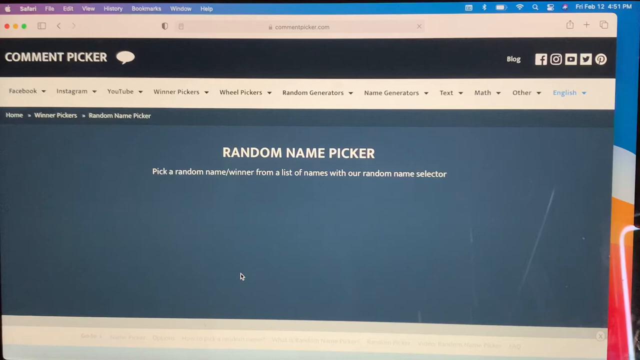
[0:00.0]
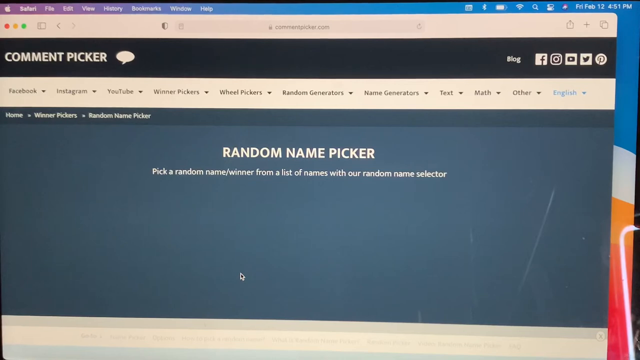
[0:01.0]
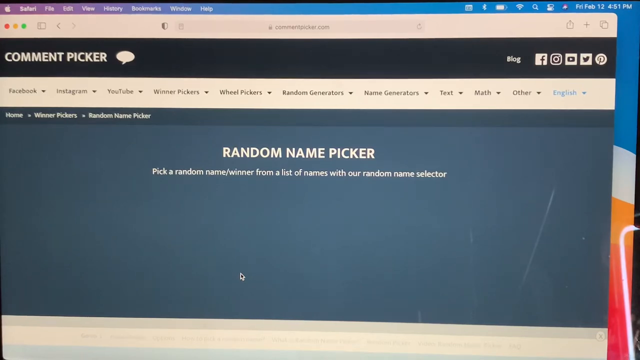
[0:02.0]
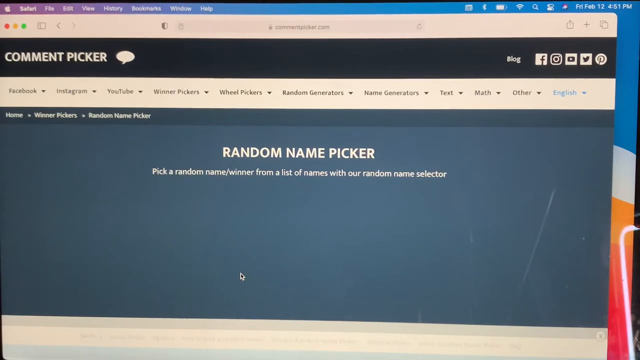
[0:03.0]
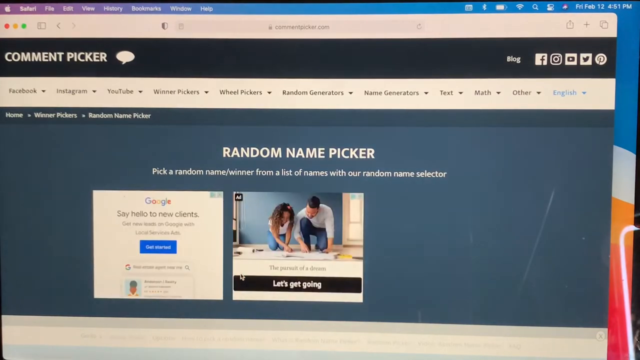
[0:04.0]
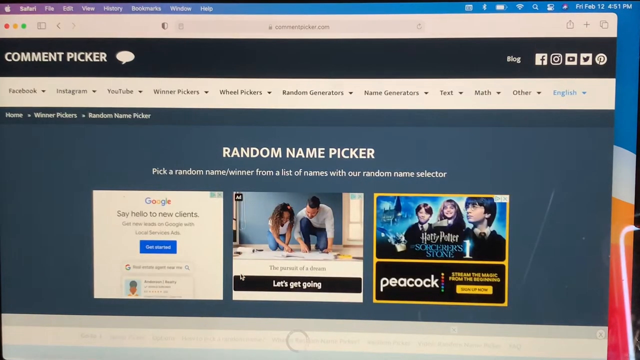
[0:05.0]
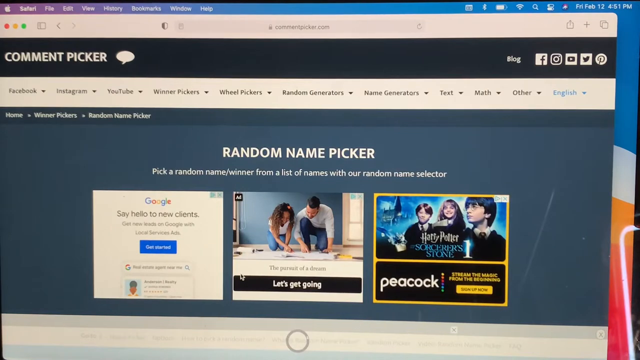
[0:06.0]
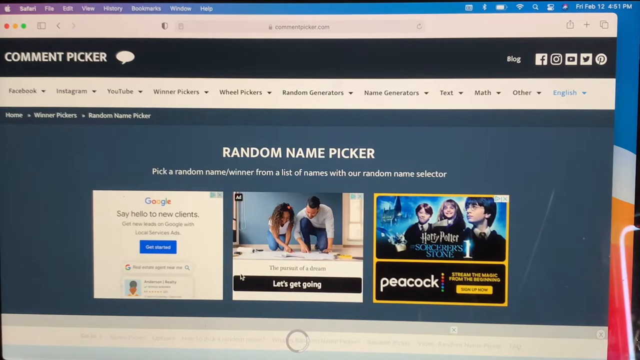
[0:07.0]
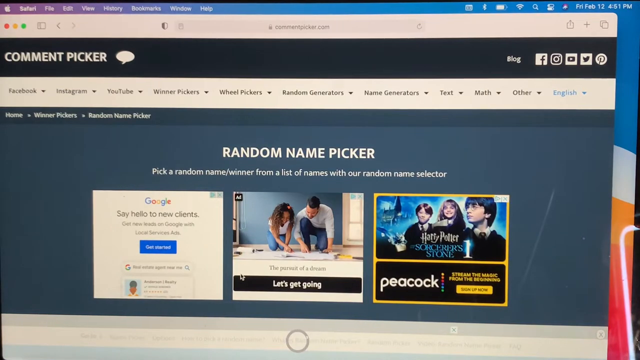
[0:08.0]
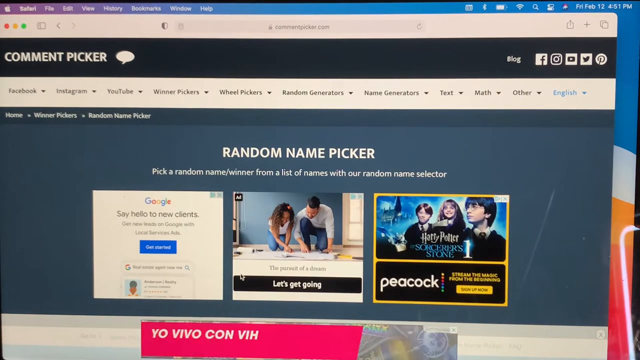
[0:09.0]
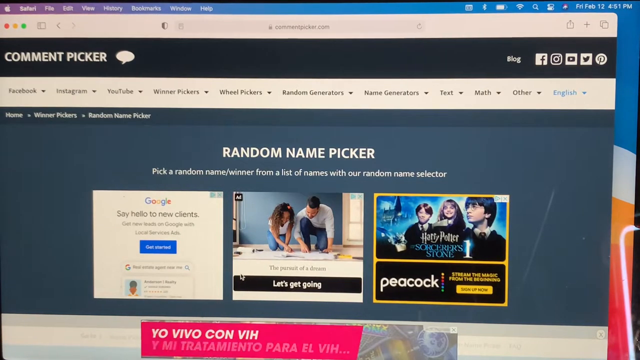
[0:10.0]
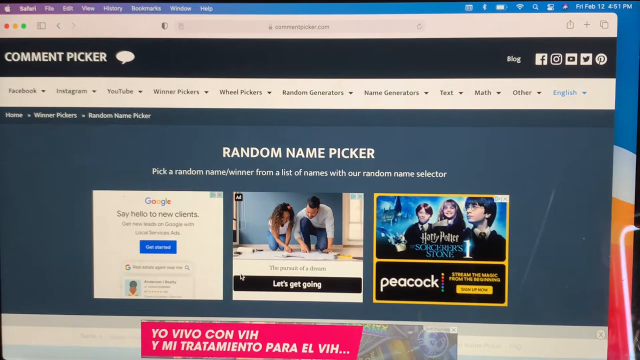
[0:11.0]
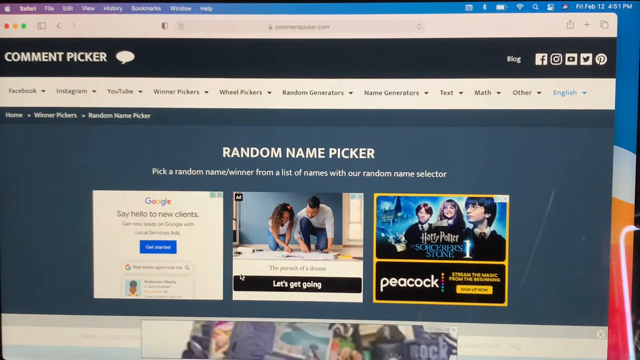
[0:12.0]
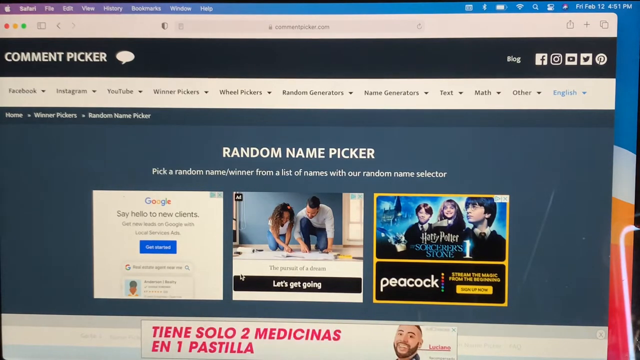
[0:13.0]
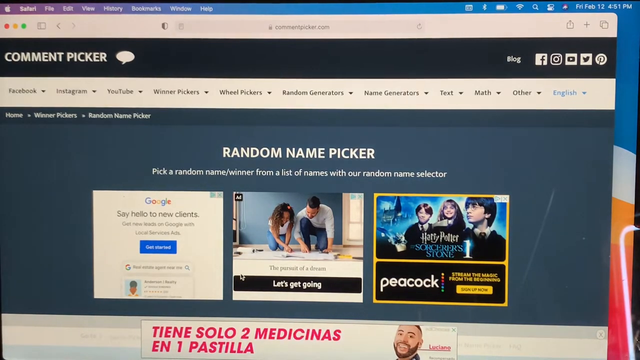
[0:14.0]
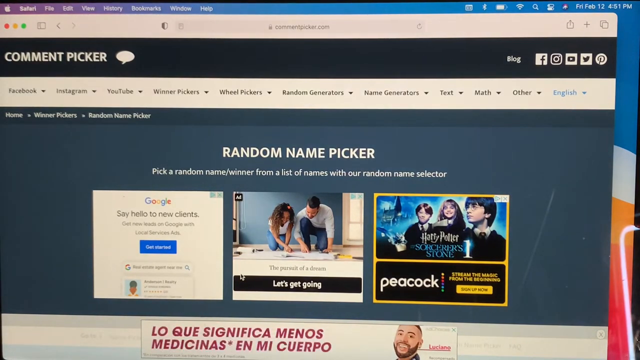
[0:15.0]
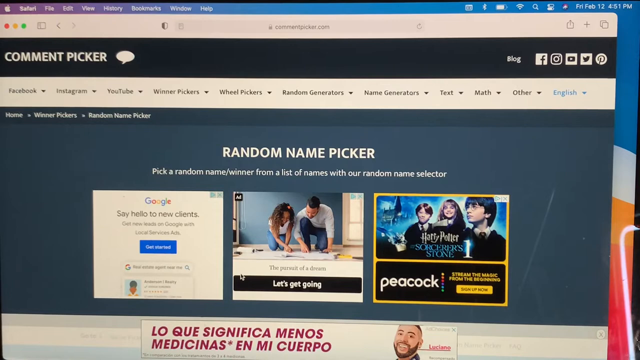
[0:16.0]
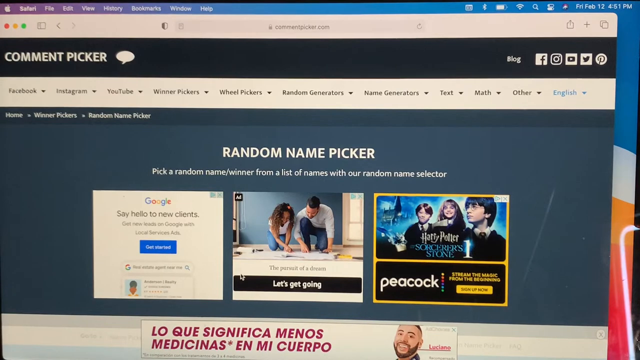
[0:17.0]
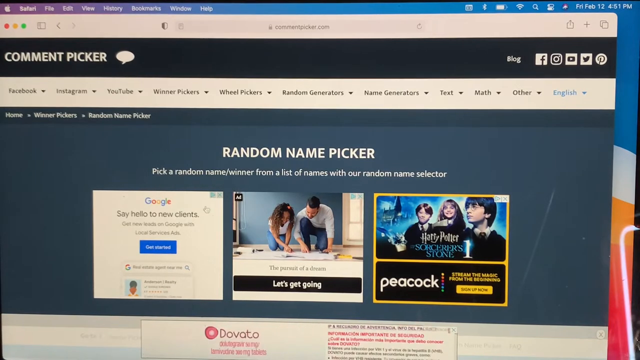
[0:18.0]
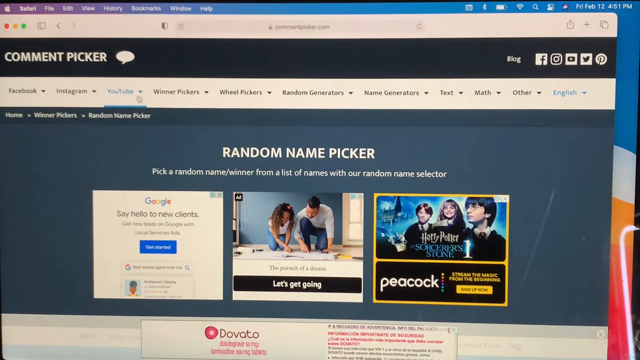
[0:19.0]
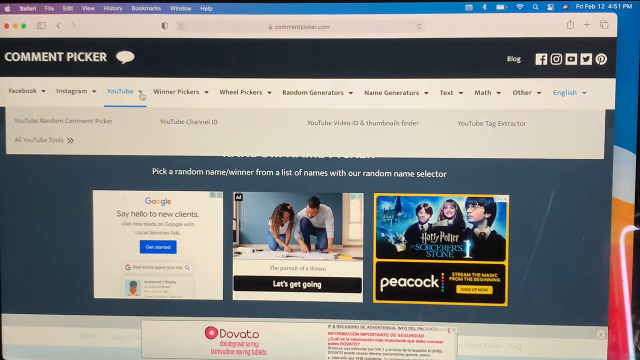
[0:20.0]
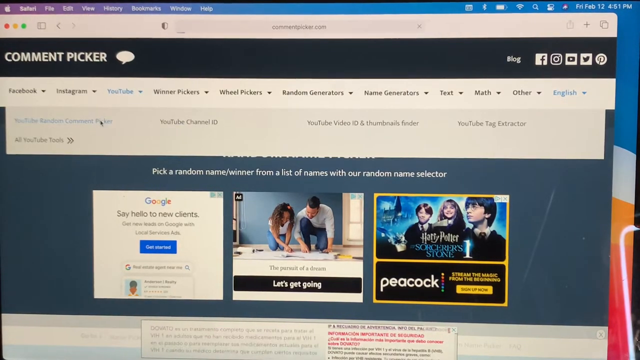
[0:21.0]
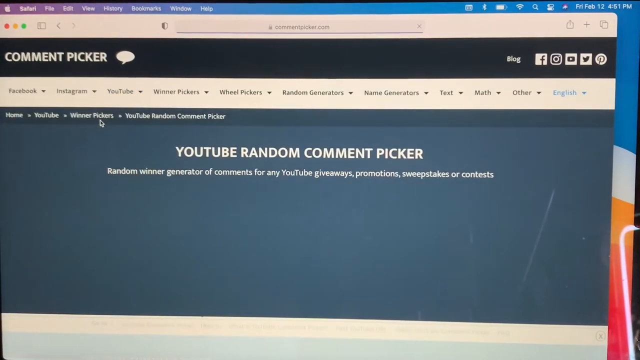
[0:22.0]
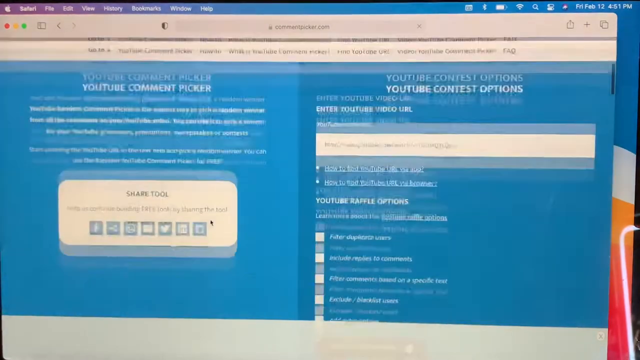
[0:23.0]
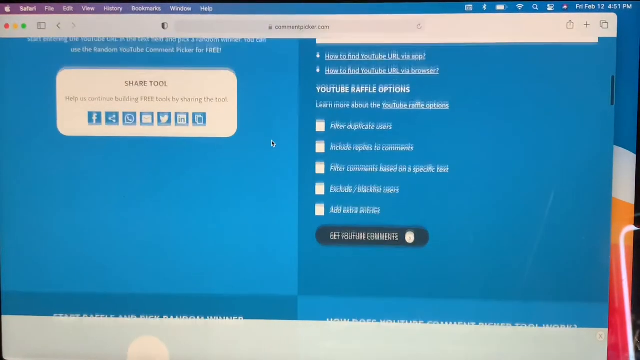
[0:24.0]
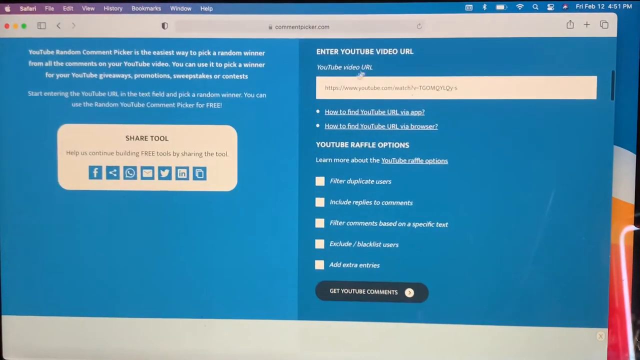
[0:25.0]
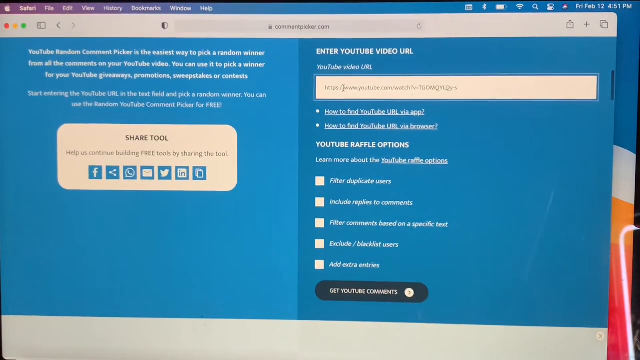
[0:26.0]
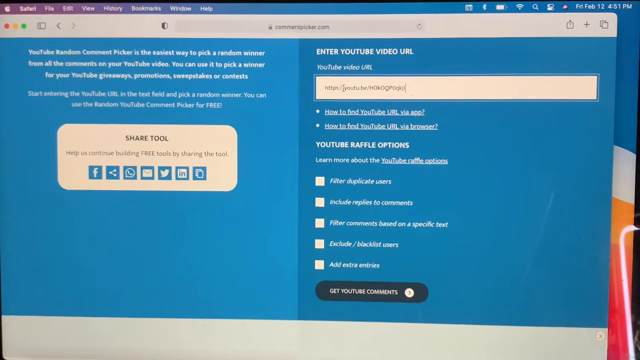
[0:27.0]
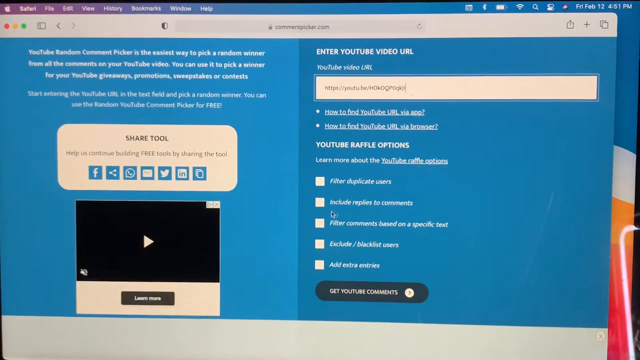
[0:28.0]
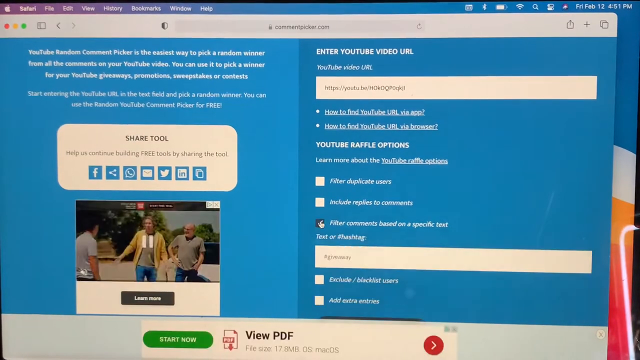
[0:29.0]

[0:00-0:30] A computer screen shows a browser on a website whose address appears to read commentpicker.com. It is an Apple browser: the navigation bar is visible at the top, and three red, yellow and green circles are at the top left. The blue webpage seems to be loading, and in the middle white text reads "random name picker," with "pick a random name winner from a list of names with our random name selector" below it. Headers along the top read "Facebook, Instagram, YouTube, winner pickers, wheel pickers, random generators, name generators, text, math, other, English." A white mouse cursor moves up to the YouTube header and clicks its downward drop-down arrow. A menu appears, and the cursor clicks the item "YouTube random comment picker." The webpage changes, and the white text now reads "YouTube random comment picker." The page scrolls down to a menu on the right side reading "enter YouTube video URL" with a text input. The cursor clicks the input and pastes in a YouTube URL. Below it are five checkboxes. The cursor clicks on "filter comments based on a specific text" and then on its checkbox, which makes an input field appear below. The cursor clicks inside that input field.